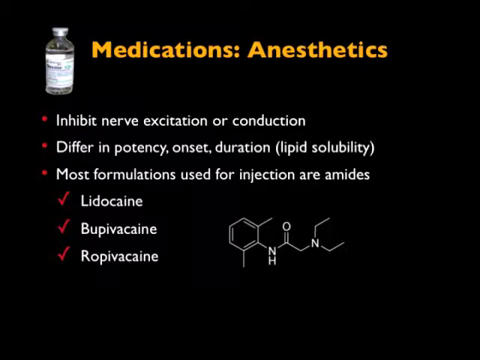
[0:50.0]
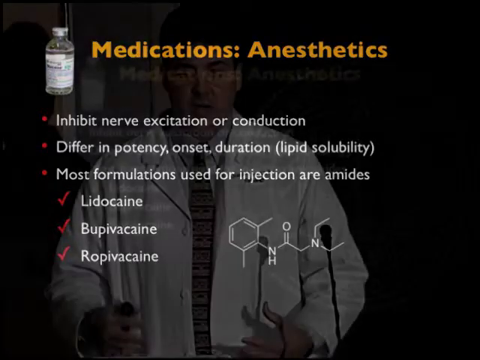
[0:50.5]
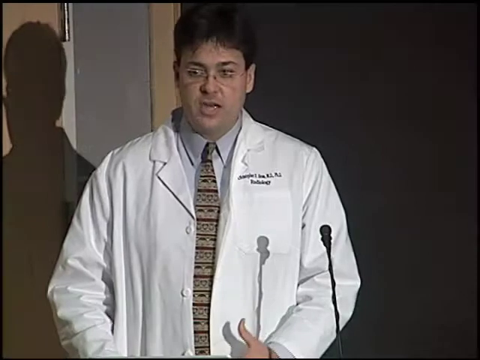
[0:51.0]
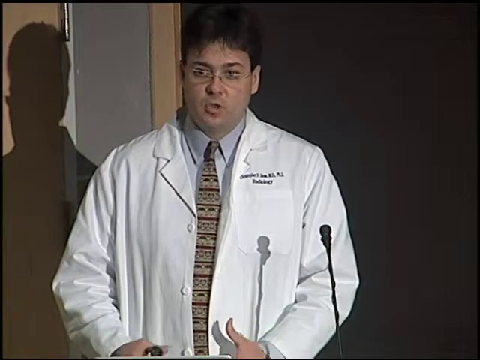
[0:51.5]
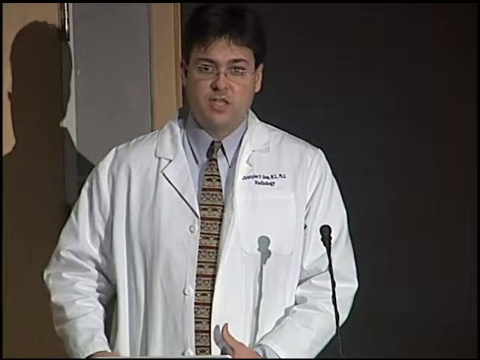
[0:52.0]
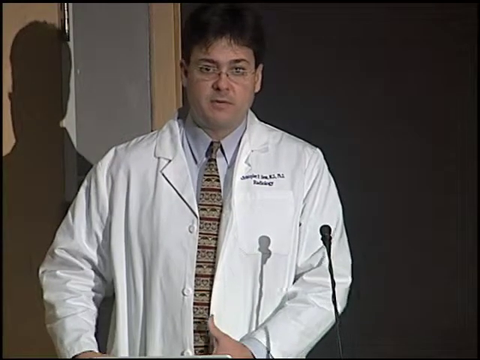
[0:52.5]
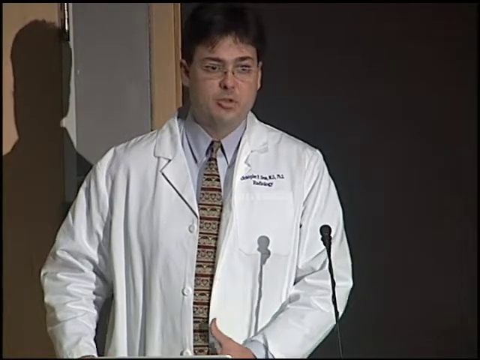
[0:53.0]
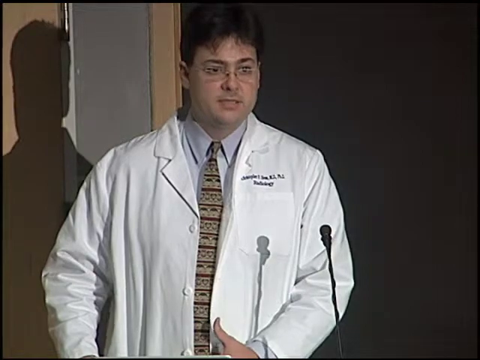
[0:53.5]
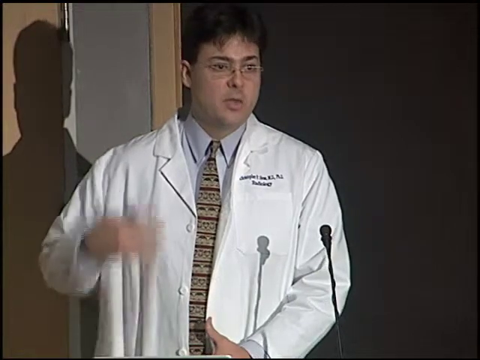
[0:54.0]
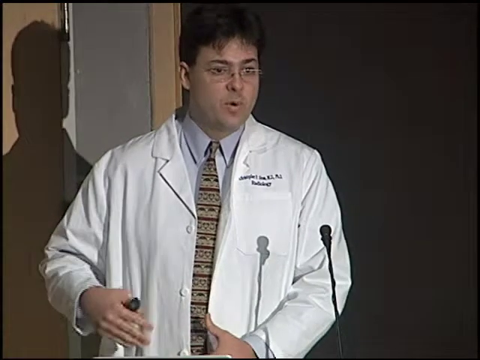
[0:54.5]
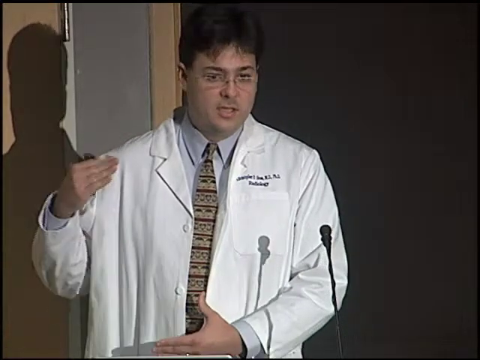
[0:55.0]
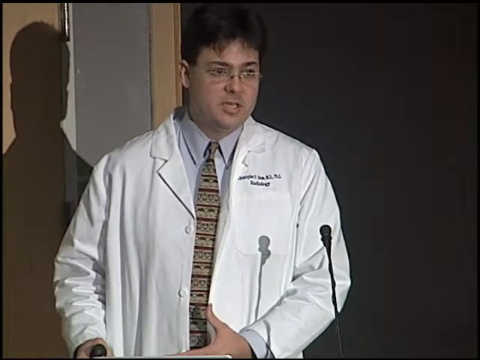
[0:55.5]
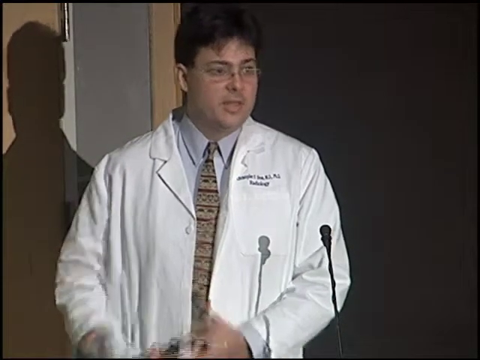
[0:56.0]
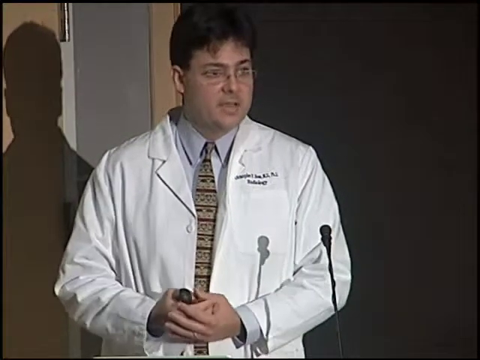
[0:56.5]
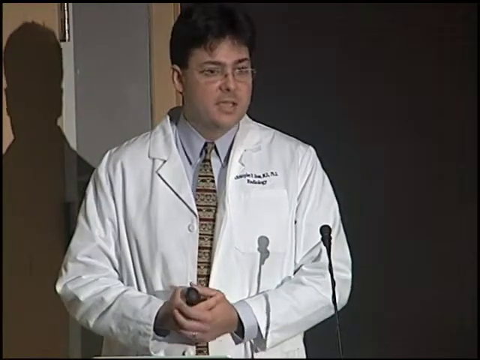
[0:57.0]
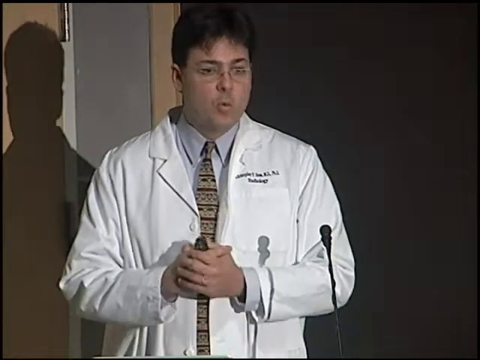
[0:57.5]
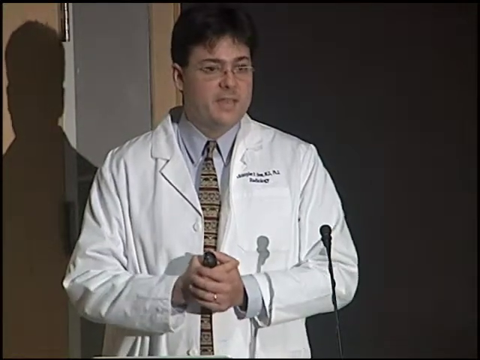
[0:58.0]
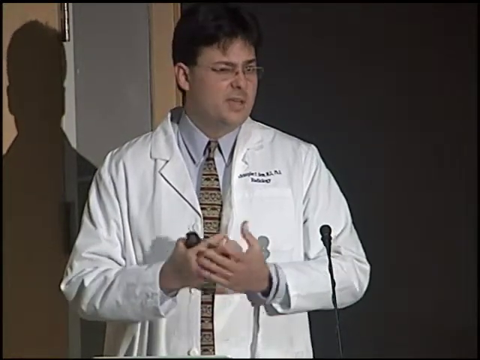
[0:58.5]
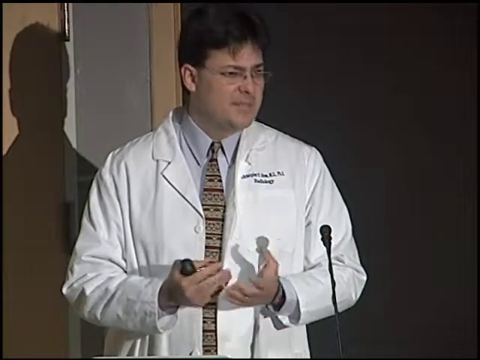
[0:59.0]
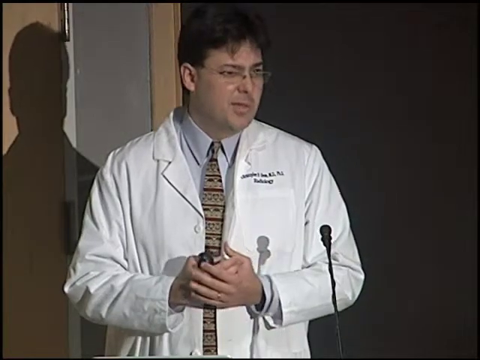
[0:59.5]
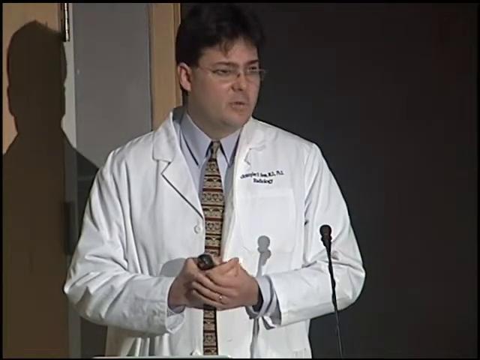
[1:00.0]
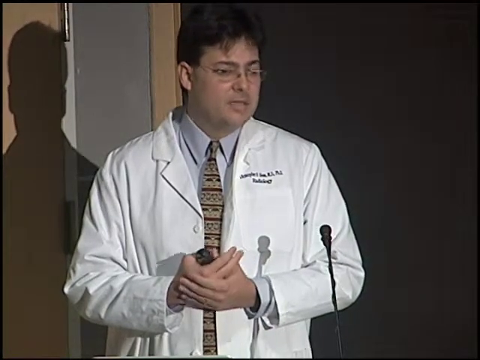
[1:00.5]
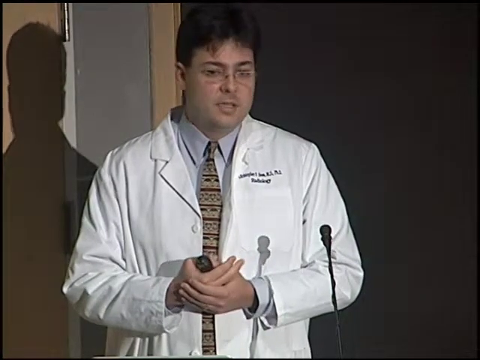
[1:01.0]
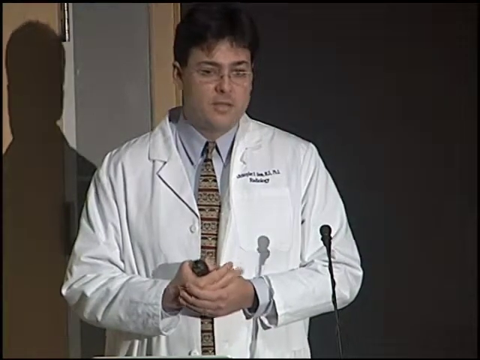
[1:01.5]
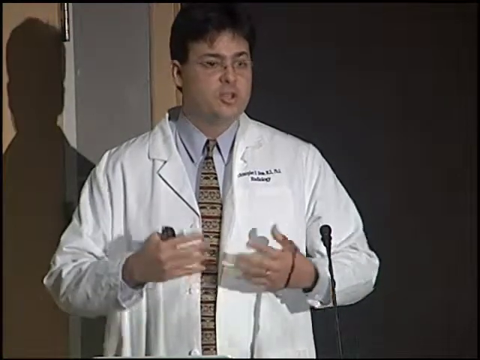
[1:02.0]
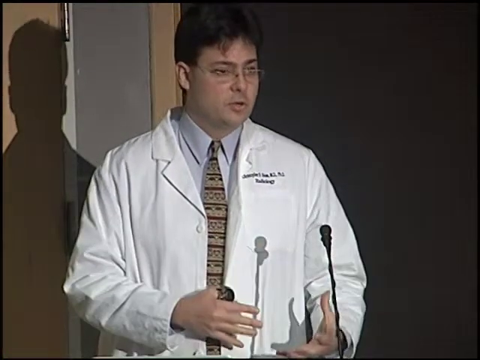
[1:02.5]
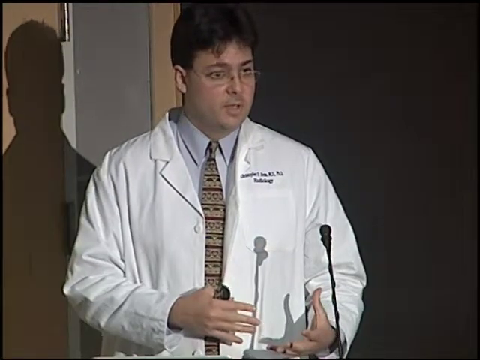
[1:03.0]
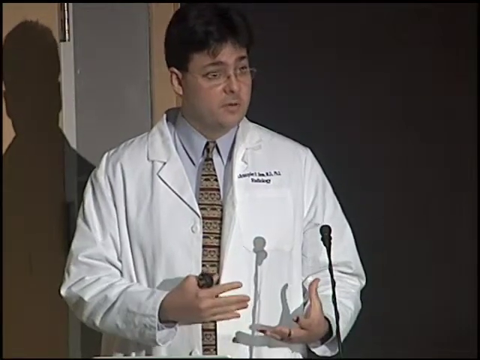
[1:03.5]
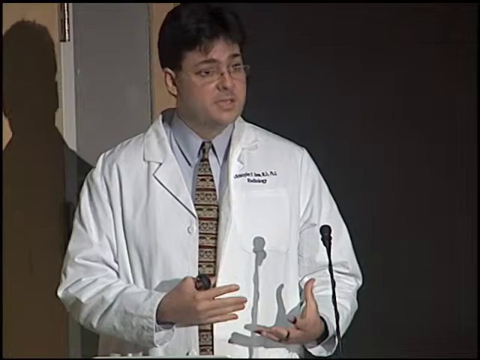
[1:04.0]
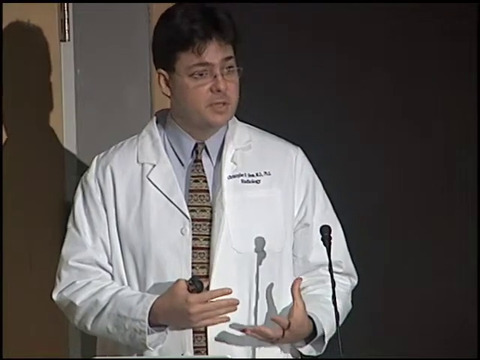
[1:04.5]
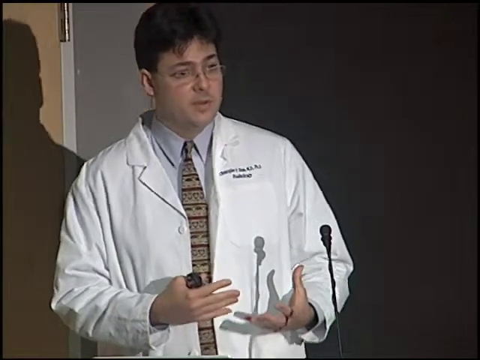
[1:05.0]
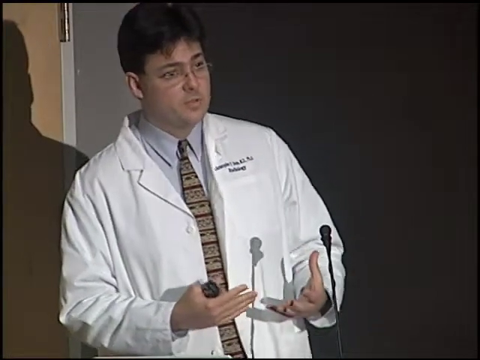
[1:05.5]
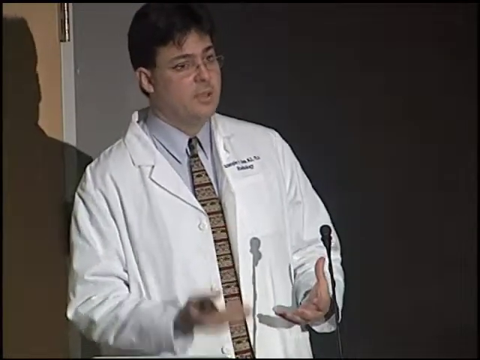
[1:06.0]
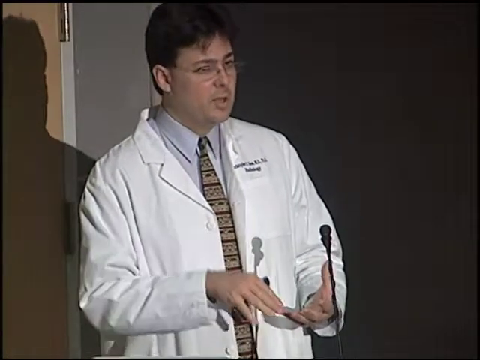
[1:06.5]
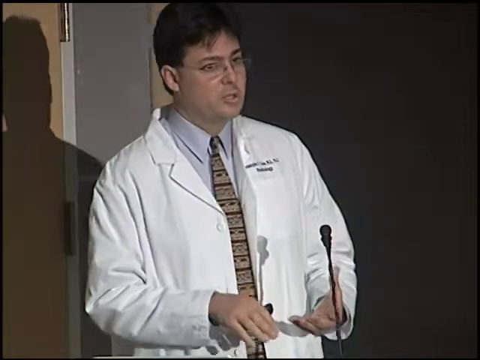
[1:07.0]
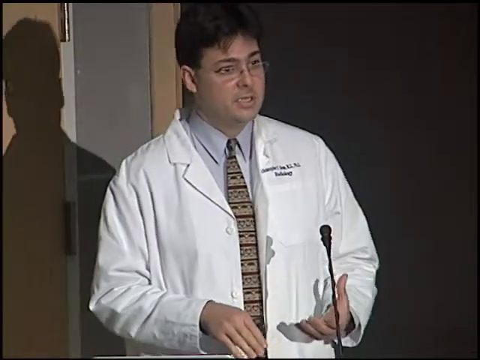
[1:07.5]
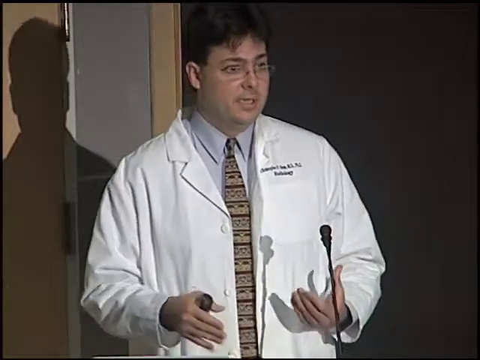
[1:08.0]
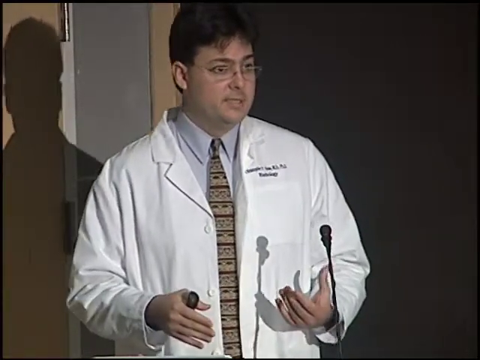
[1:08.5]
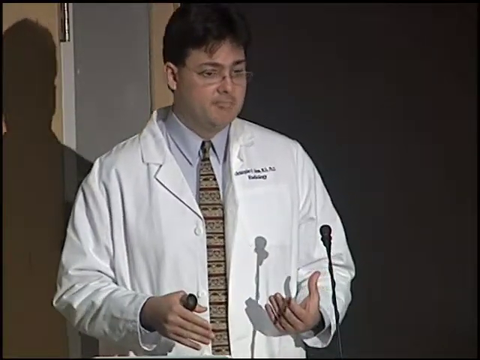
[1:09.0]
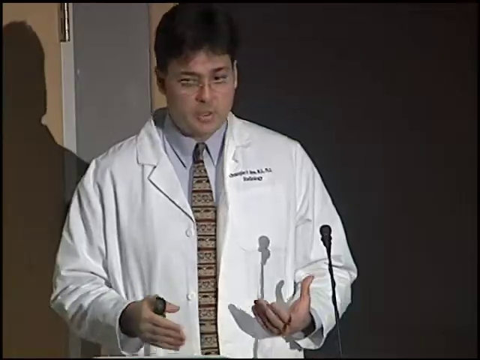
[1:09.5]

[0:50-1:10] A black slide shows "medication anesthetics" in orange-yellow. Below some space, white text reads "inhibit nerve excitation or conduction," "differ in potency, onset, duration," and "most formulations used for injection are amides," followed by "lidocaine," "bupivacaine" and "ropivacaine." The video goes back to the doctor speaking. He holds what appears to be a remote, and the slides may be zoomed-in views of the actual presentation slides. No projector is visible. The remote is in his right hand, but because he is facing the camera it looks like it is in his left hand.